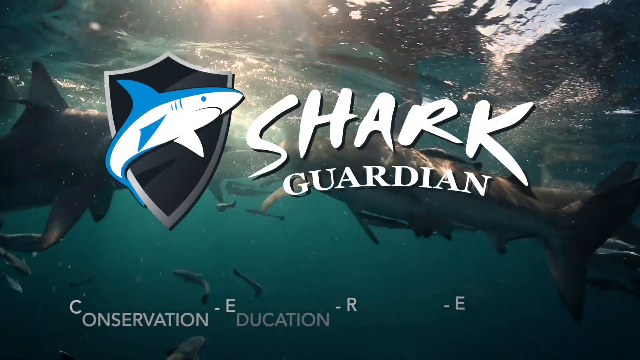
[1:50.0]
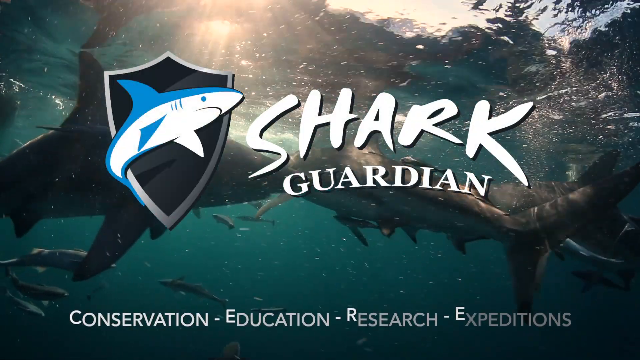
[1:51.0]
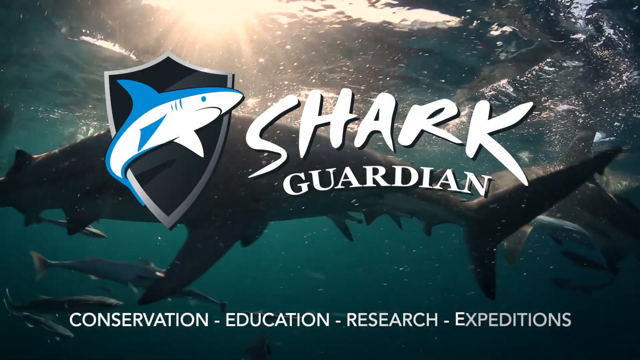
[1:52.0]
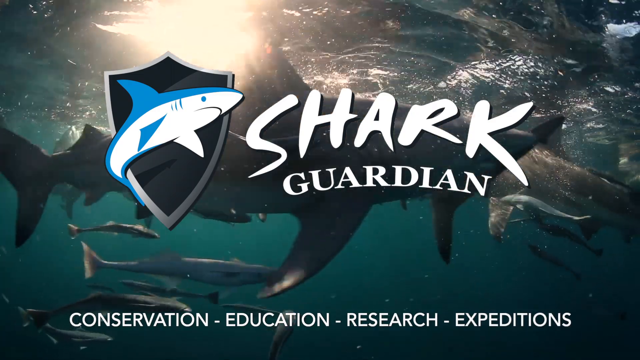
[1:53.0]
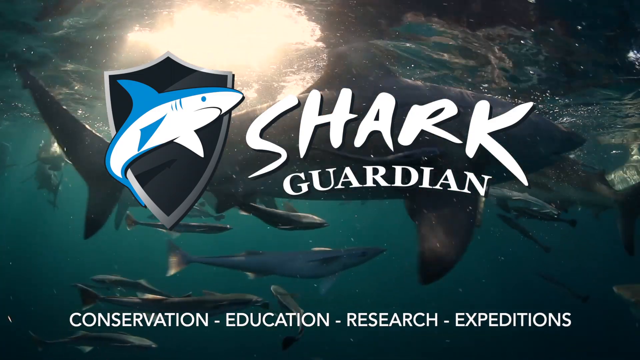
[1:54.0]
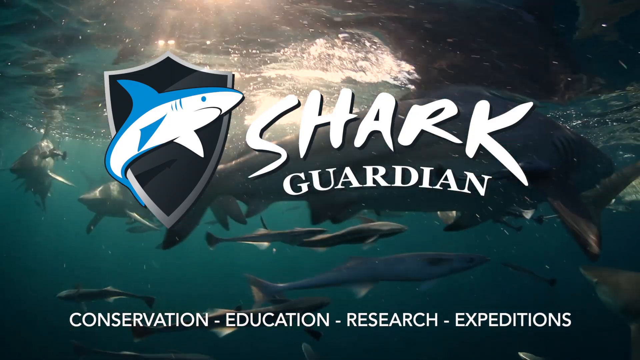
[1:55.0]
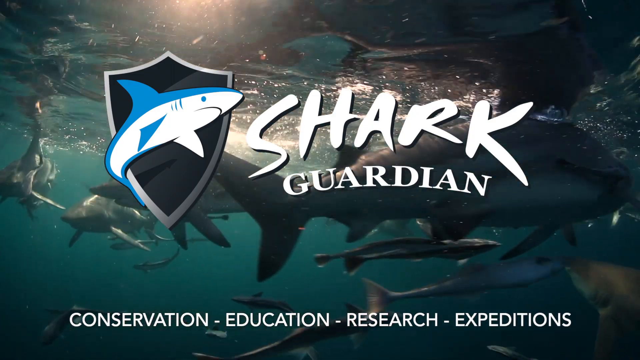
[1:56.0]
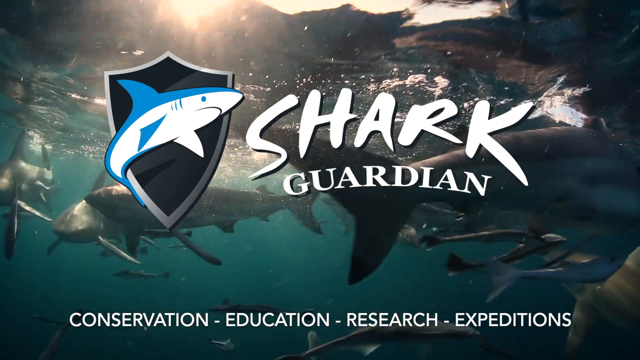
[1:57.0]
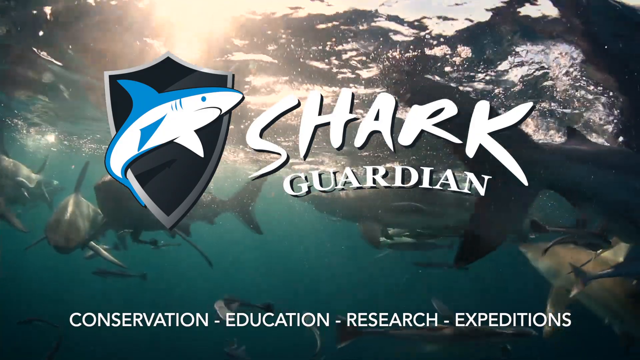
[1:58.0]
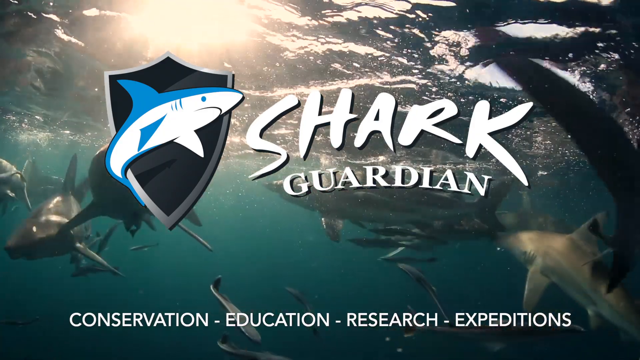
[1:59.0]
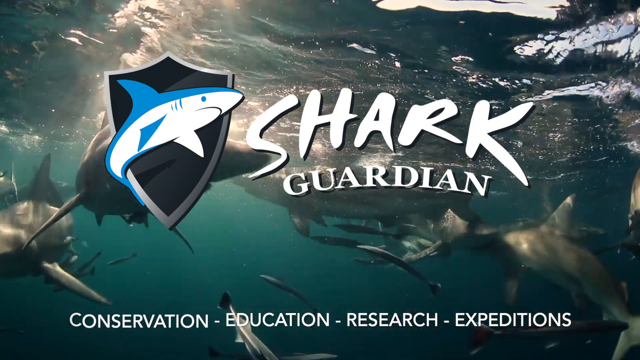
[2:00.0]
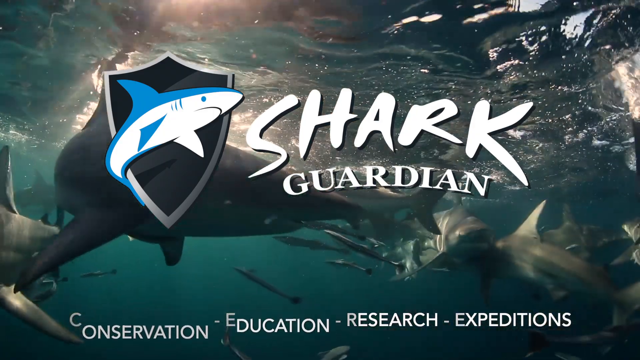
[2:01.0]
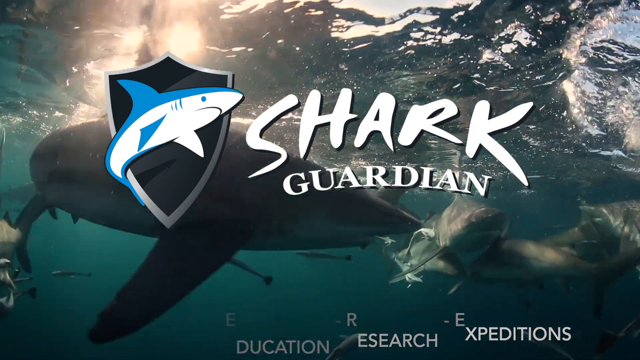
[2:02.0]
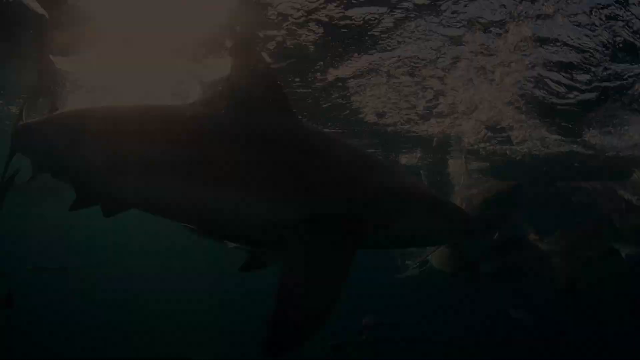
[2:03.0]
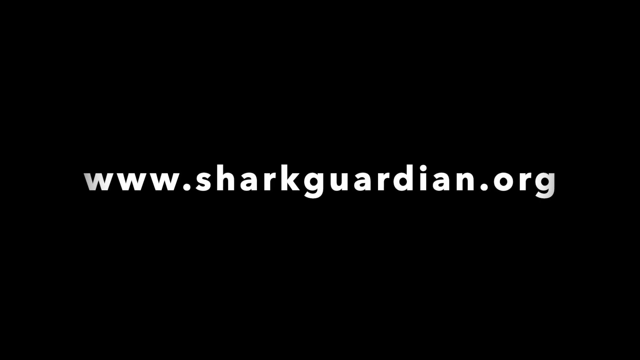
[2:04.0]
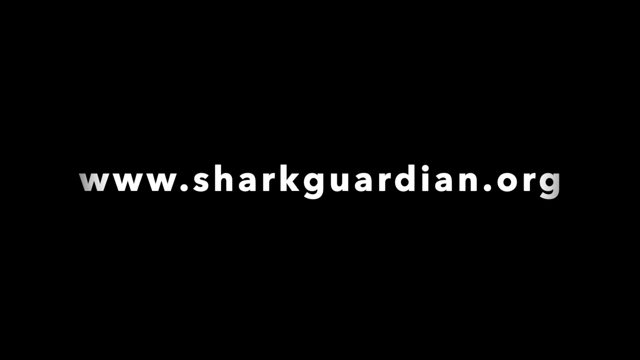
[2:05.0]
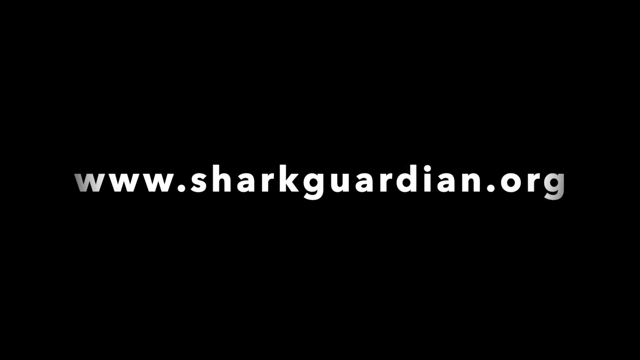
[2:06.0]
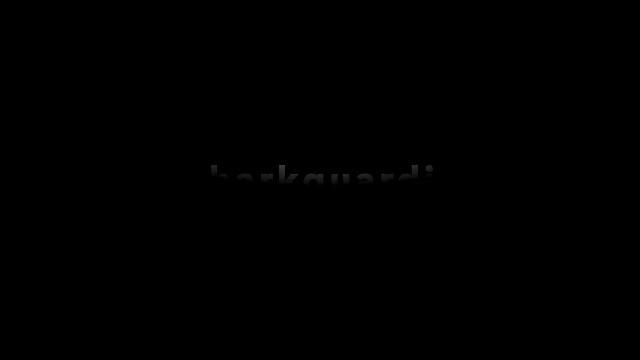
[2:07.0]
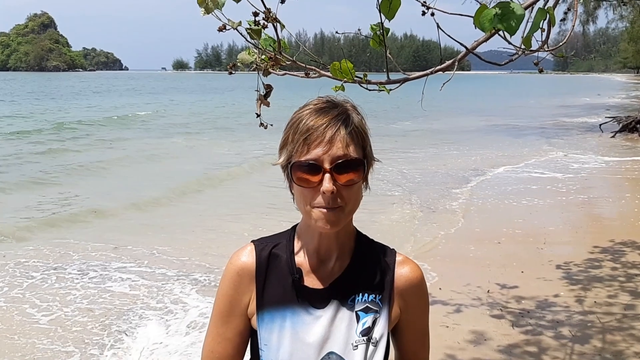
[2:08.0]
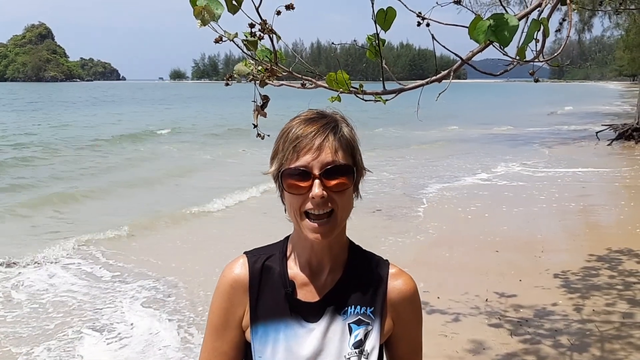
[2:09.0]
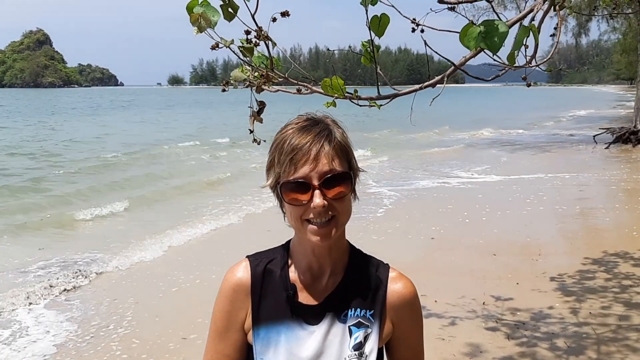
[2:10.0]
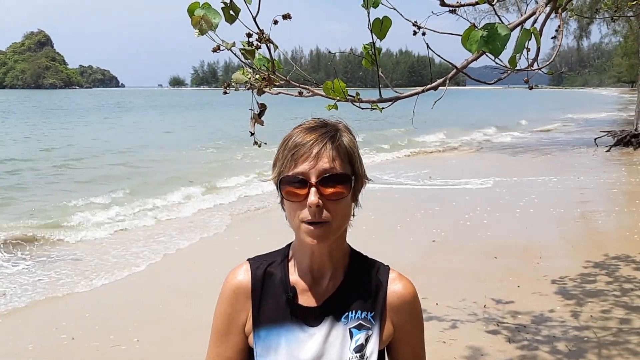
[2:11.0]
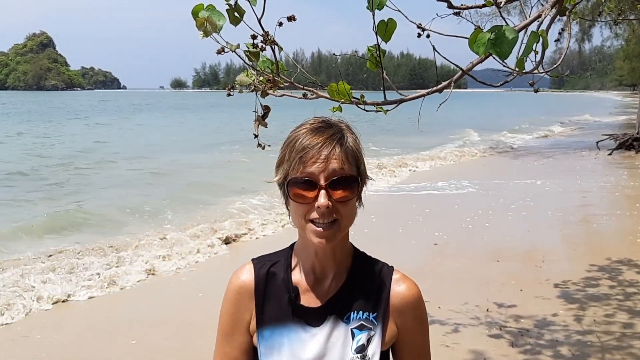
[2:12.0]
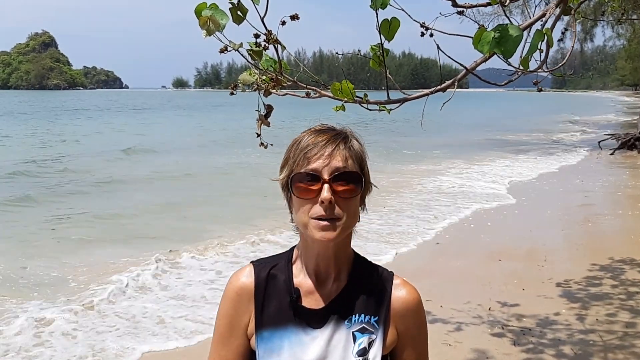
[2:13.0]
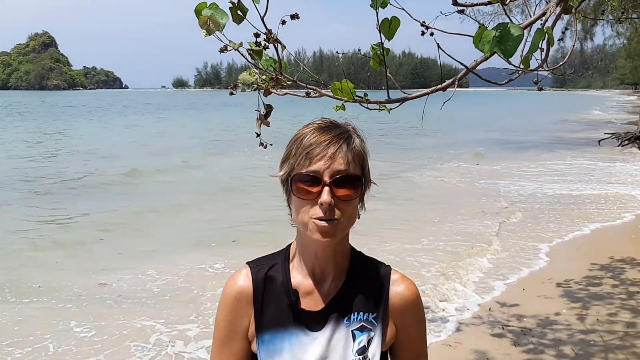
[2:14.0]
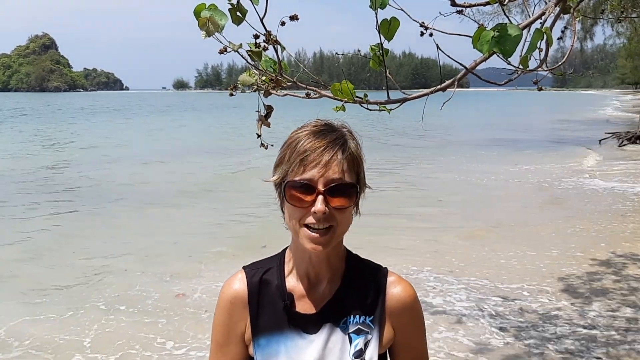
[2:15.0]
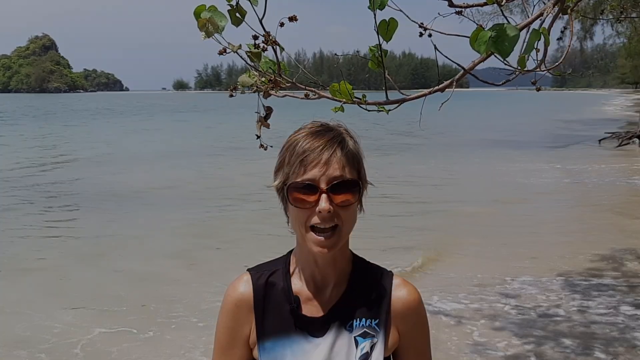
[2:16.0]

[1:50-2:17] A blue and white shark logo appears on a background of a black and silver badge. Next to it, text reads "Shark Guardian". At the bottom of the screen are the words "convention, education, research, and expedition". The screen slides to the next one, which shows "www.sharkguiding.org" on a black background. Next, a woman stands by the sea wearing red sunglasses and a blue, white and black vest. Behind her is the sea, and the waves come close to her, hitting her feet just above the ankles.